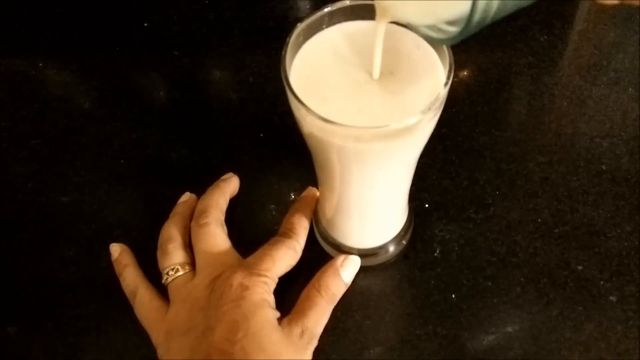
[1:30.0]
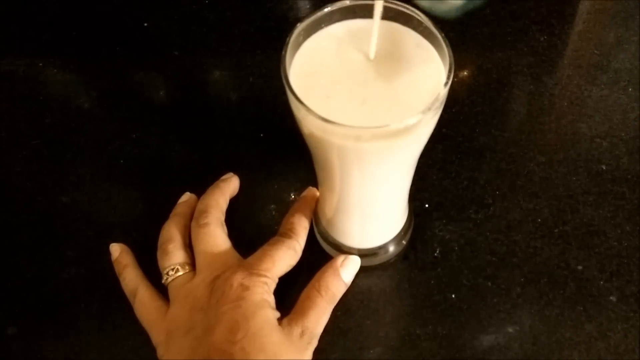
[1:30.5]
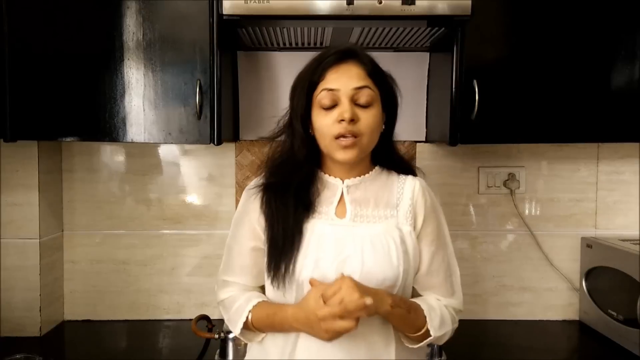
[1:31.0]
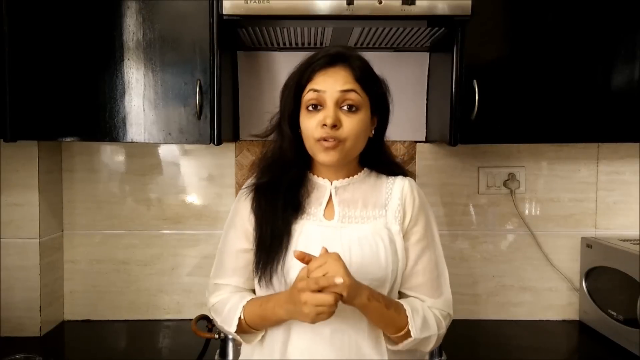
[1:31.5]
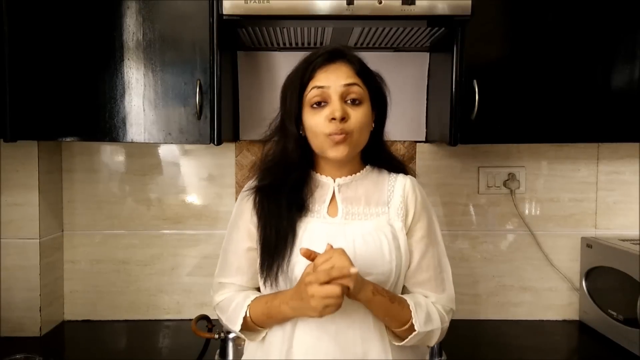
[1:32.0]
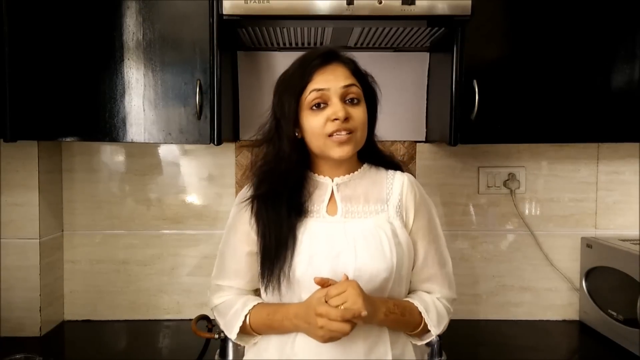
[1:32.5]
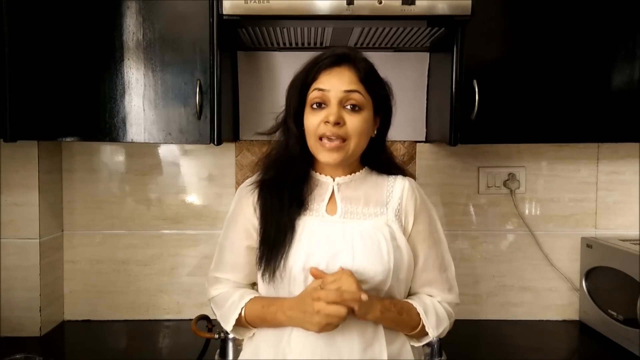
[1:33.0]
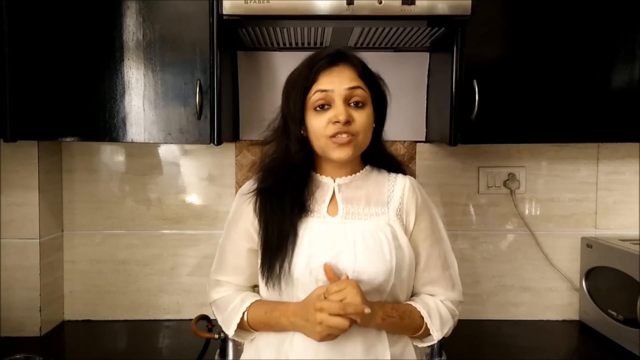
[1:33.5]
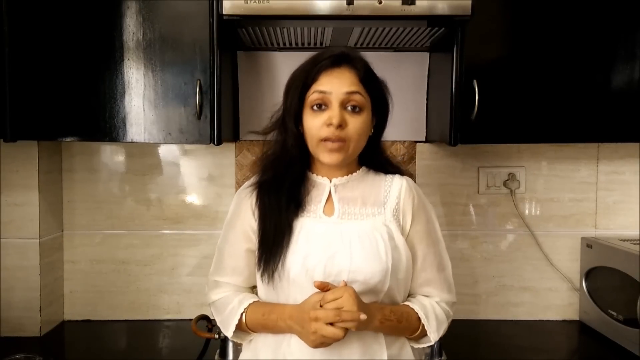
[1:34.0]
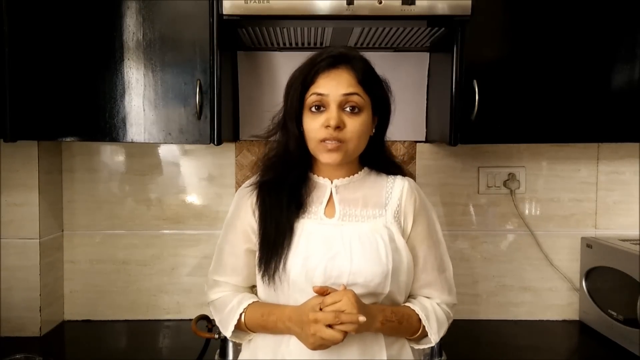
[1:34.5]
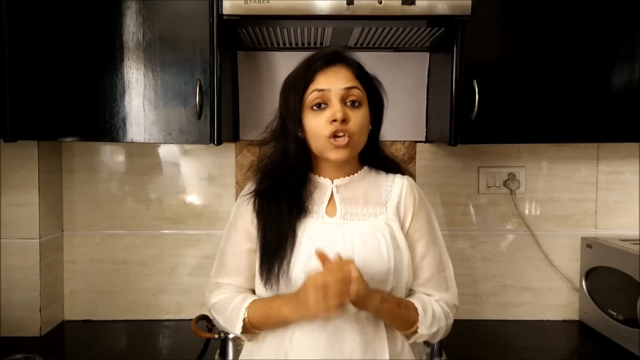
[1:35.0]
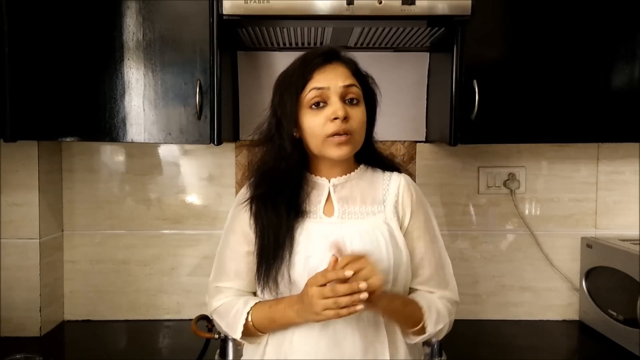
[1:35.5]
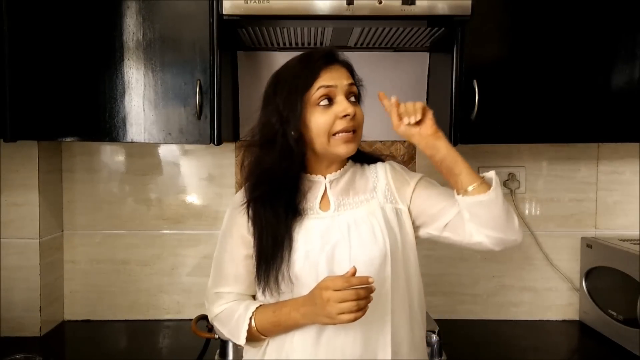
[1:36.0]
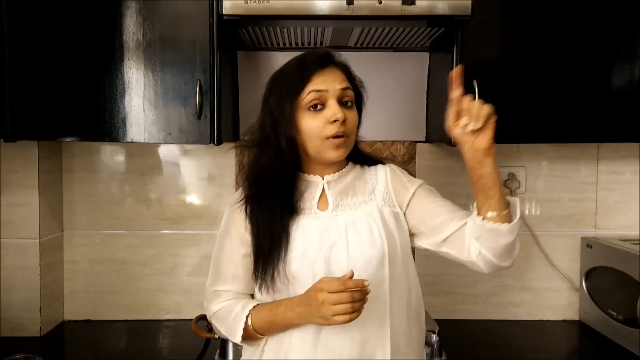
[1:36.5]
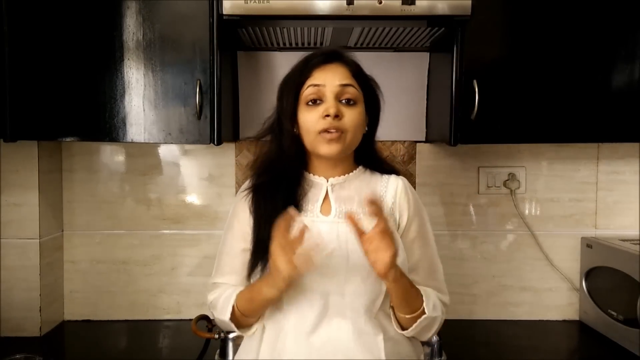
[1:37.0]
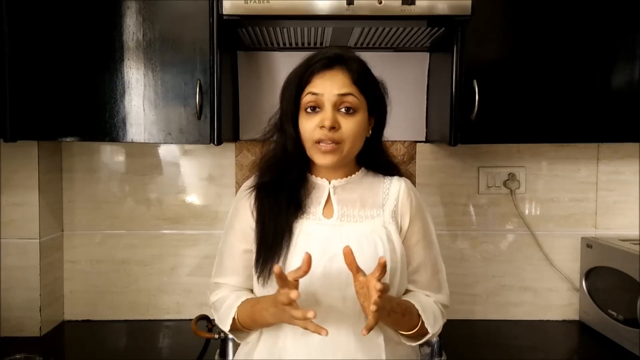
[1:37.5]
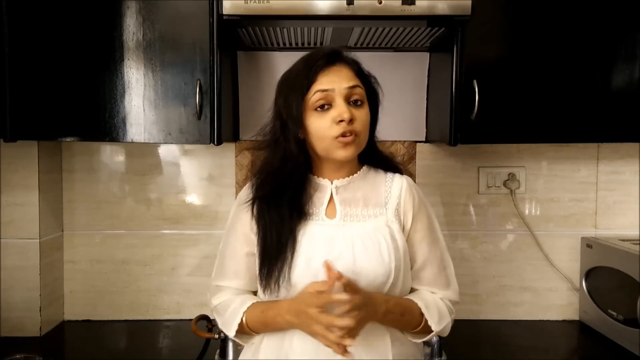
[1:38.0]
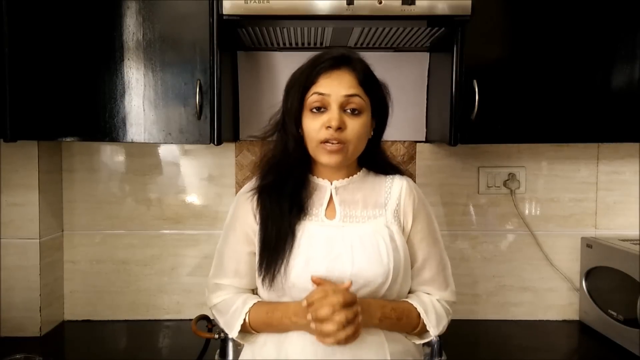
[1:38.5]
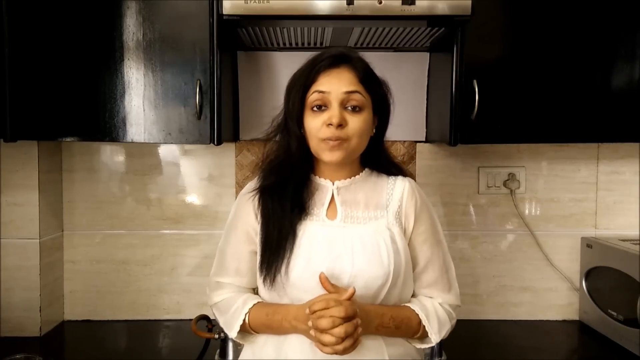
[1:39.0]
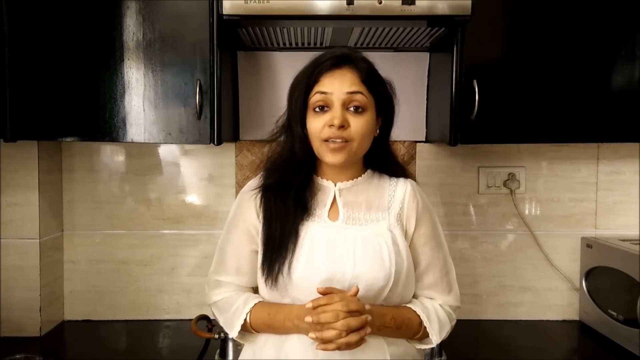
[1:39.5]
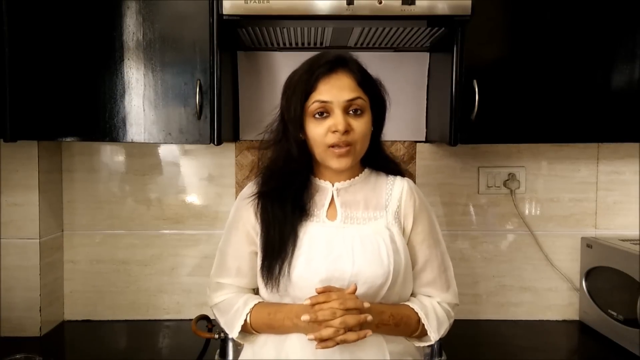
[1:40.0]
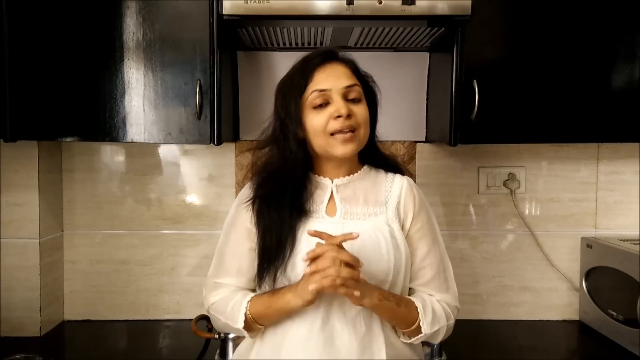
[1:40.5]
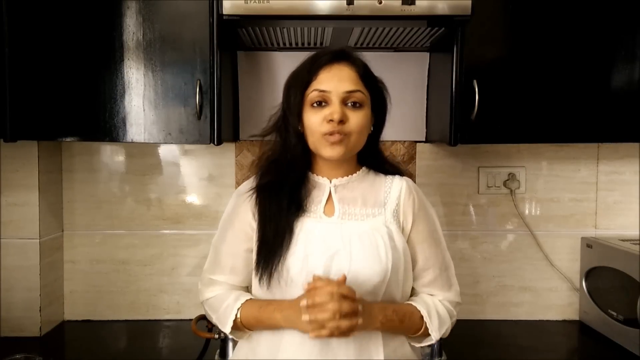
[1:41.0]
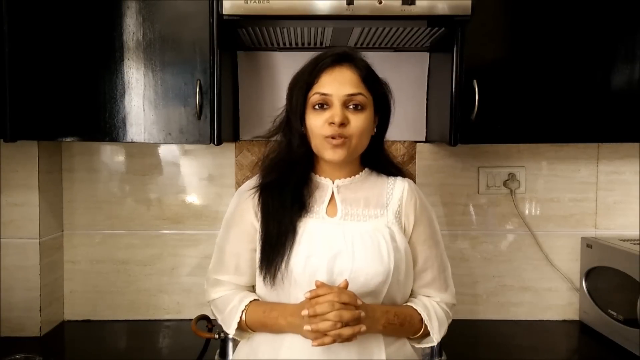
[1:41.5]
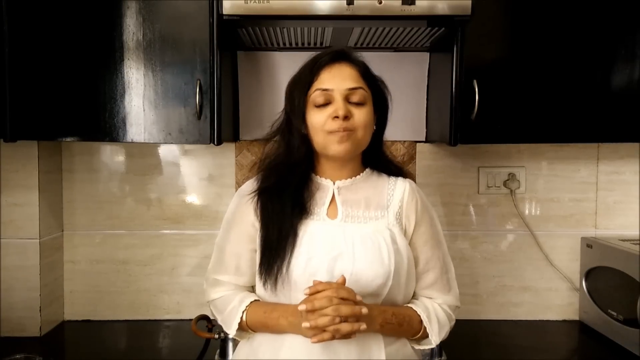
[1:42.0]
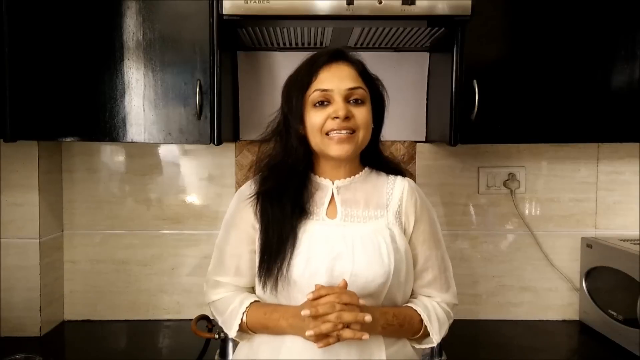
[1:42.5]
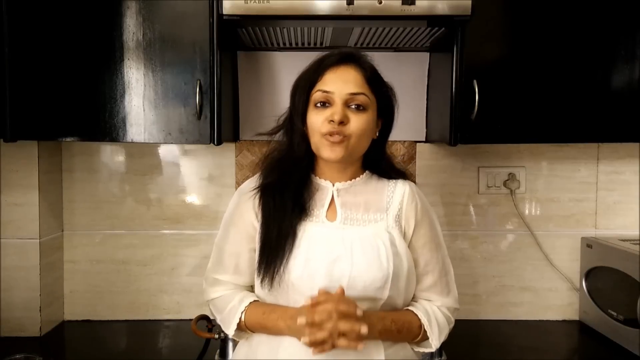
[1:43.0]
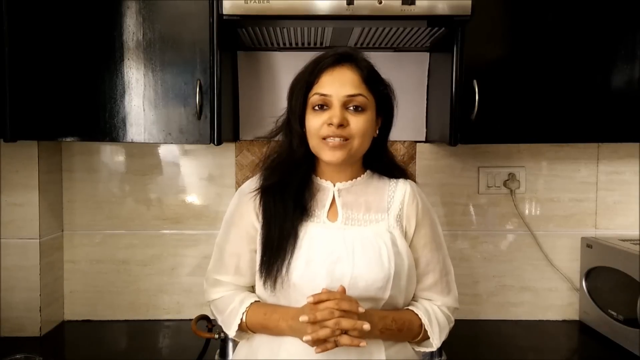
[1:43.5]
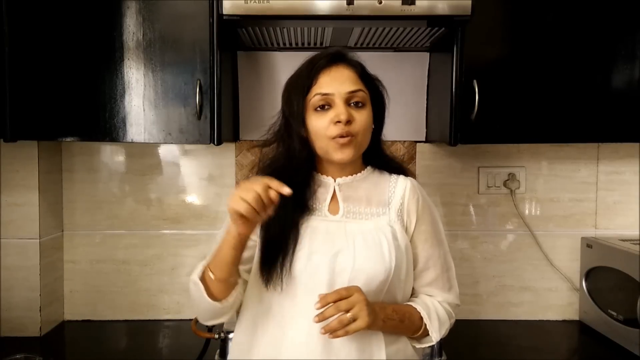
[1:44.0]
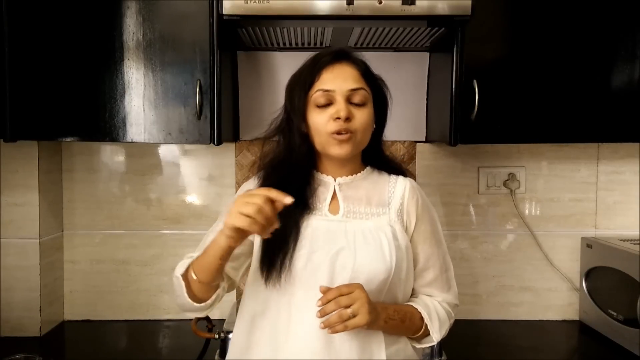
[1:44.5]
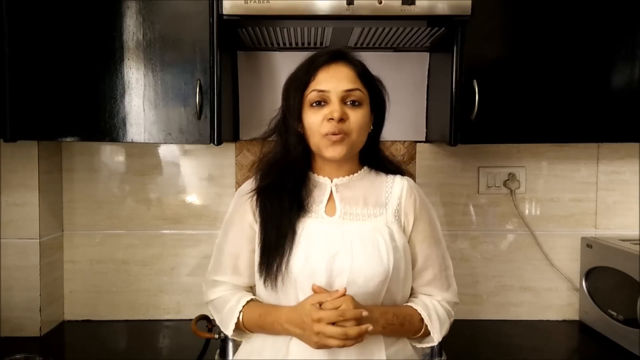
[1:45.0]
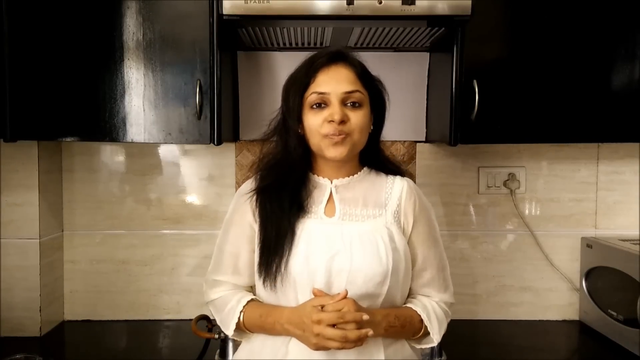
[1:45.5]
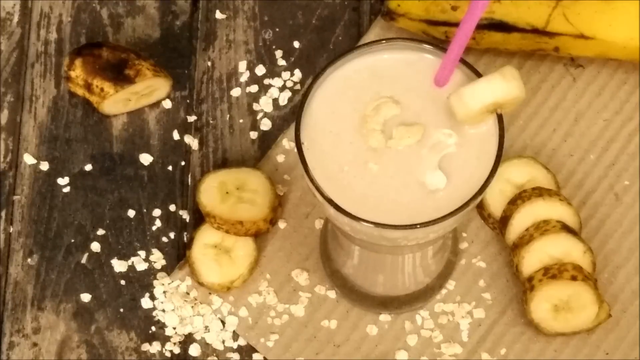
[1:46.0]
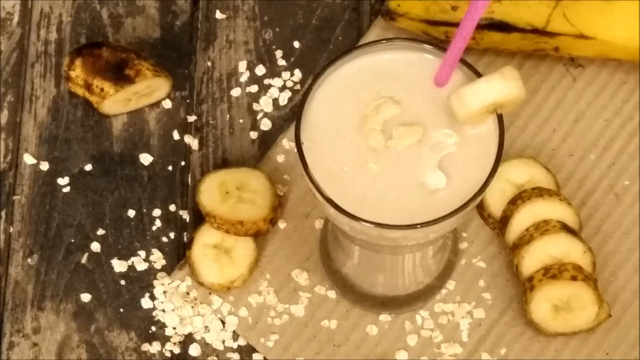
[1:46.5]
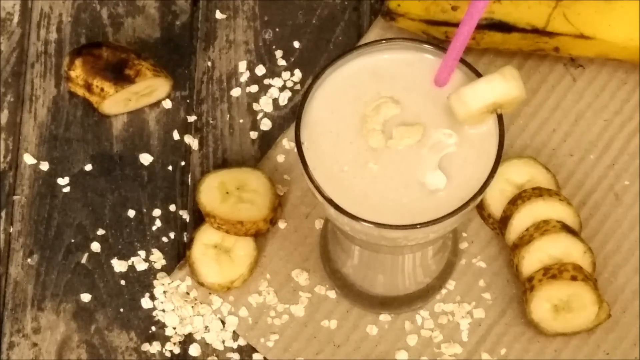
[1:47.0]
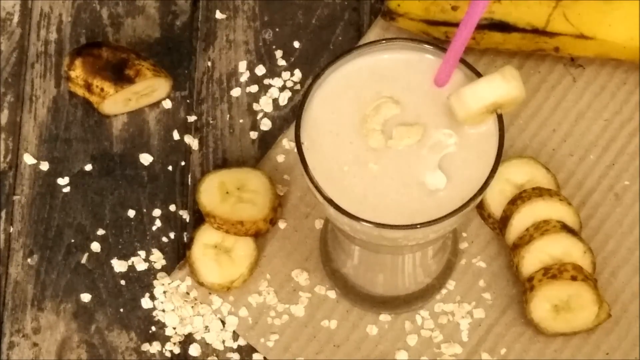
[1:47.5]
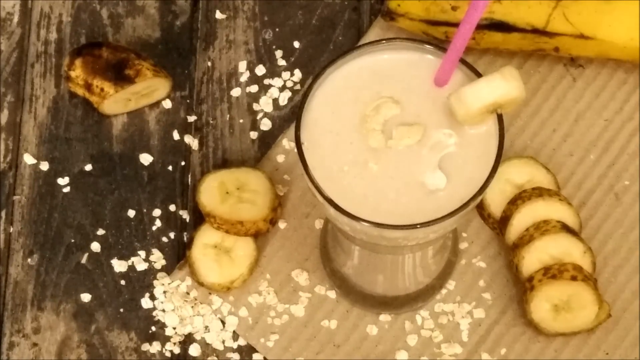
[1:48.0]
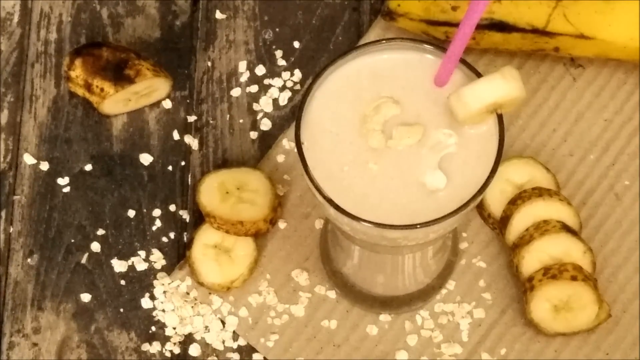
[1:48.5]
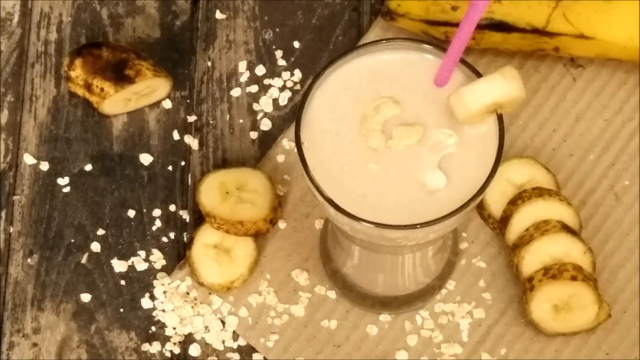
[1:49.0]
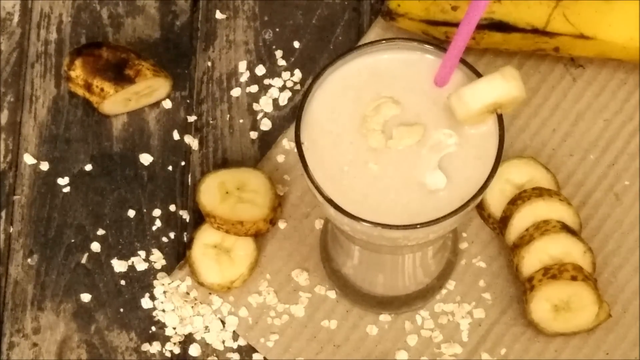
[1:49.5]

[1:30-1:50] A woman's left hand, with a ring on the finger next to her pinkie, holds a tall glass on a shiny black marble surface while her other hand pours a white liquid into it; it looks like a sort of milkshake. The camera then cuts to a young woman with long black hair in a white dress. Behind her are fancy black kitchen cabinets and whitish-grey tiles, with a toaster plugged into the wall socket on the right-hand side. She speaks to the camera with her hands closed together, then points up, opens her hands and puts them back together, clasping them in a sort of praying manner. She continues to speak to the camera, then points down below. What looks like a milkshake-type drink is shown, with chopped banana pieces and a pink straw, on top of some sort of chopping board. Something that looks like big pieces of salt is also on the chopping board.